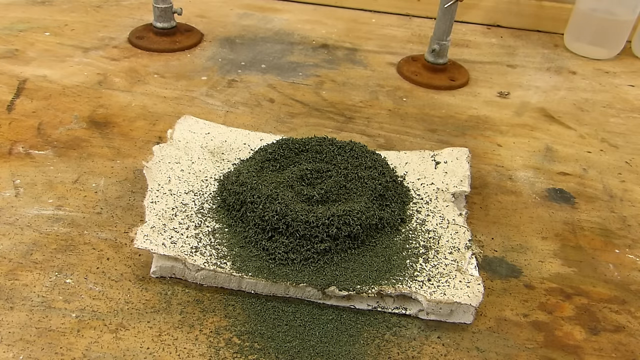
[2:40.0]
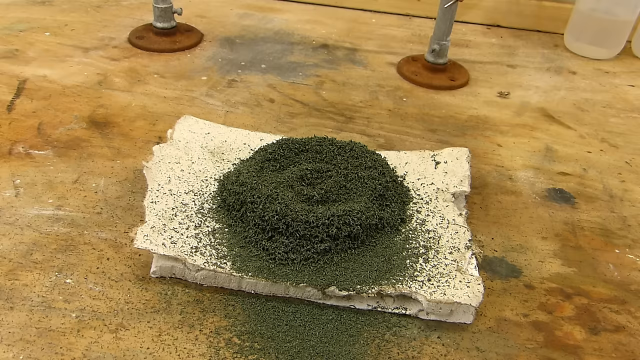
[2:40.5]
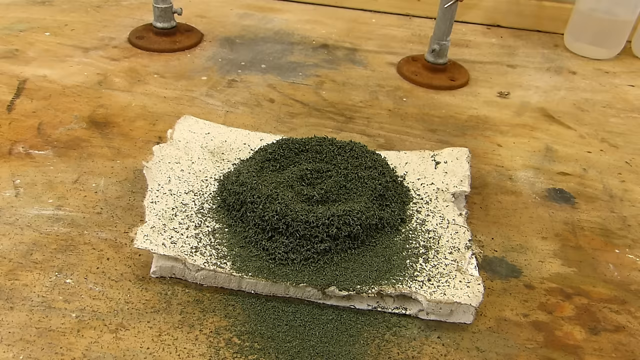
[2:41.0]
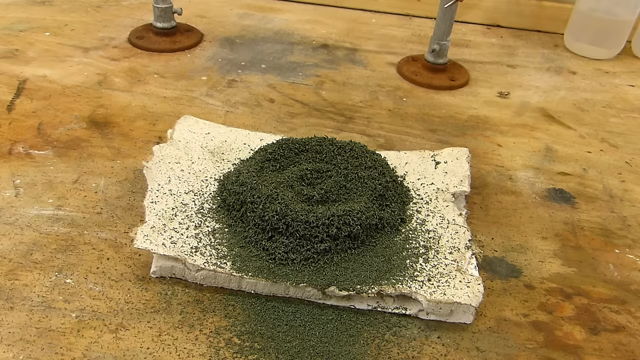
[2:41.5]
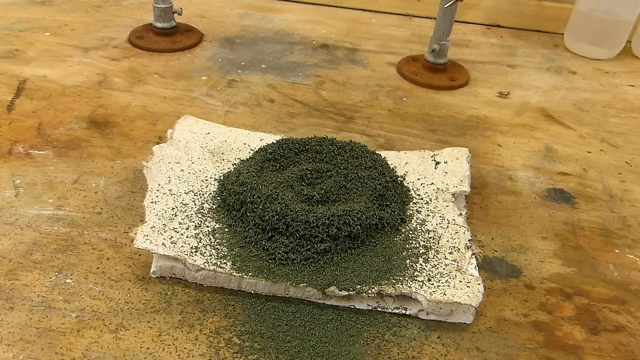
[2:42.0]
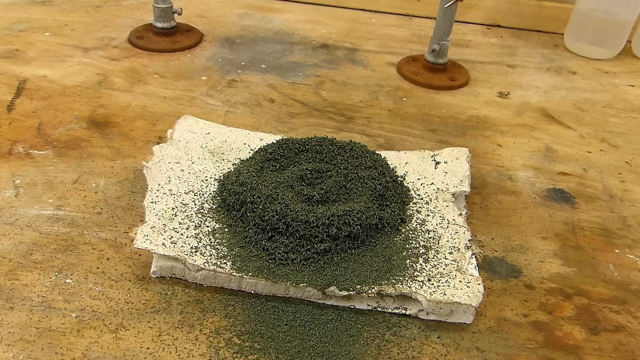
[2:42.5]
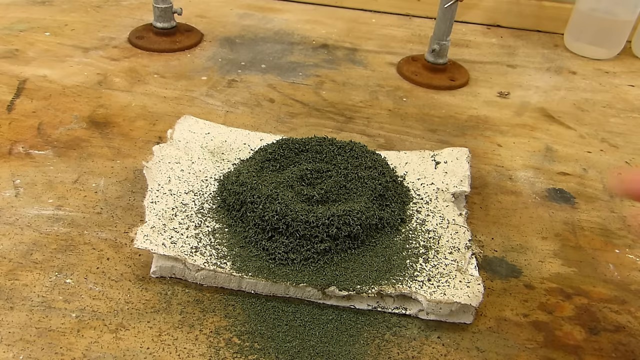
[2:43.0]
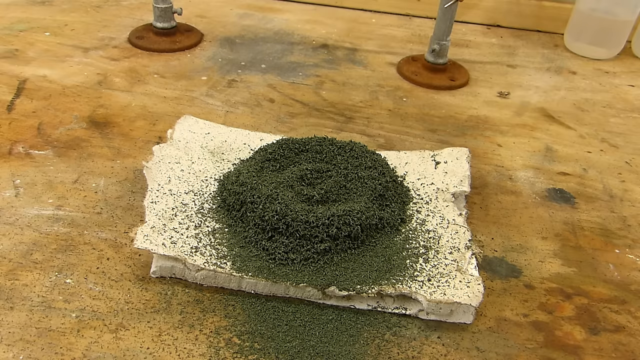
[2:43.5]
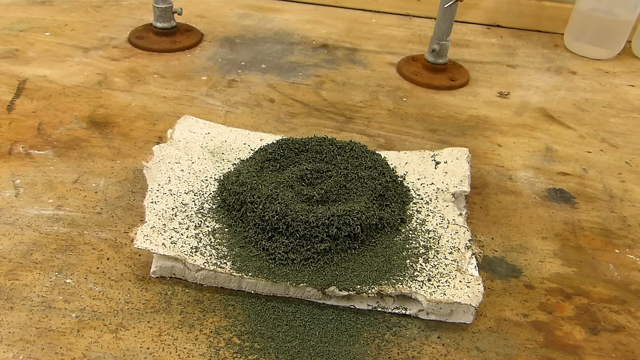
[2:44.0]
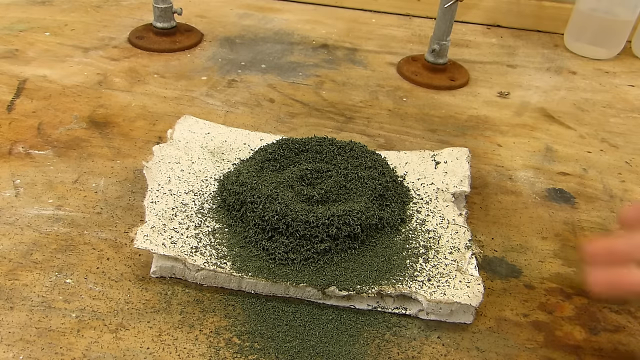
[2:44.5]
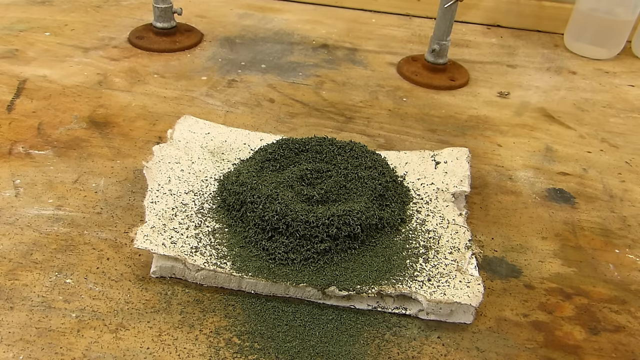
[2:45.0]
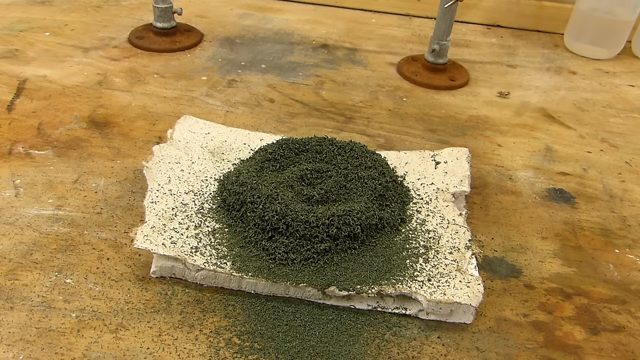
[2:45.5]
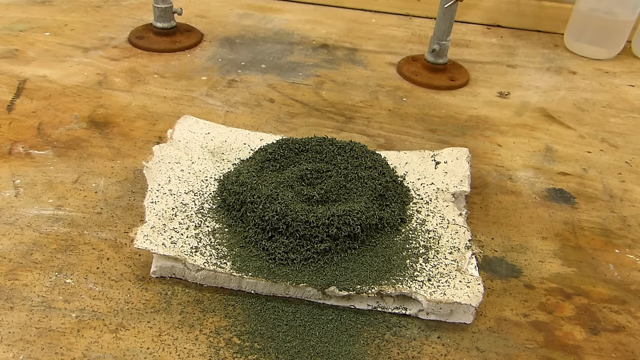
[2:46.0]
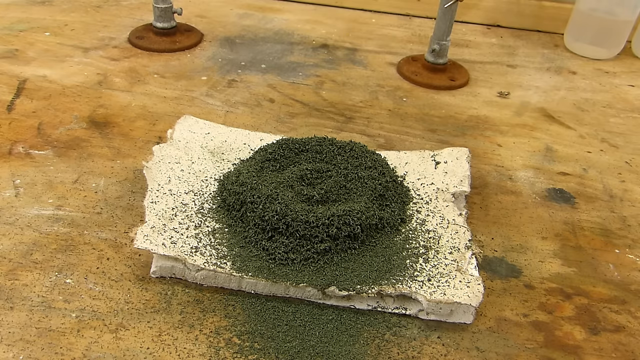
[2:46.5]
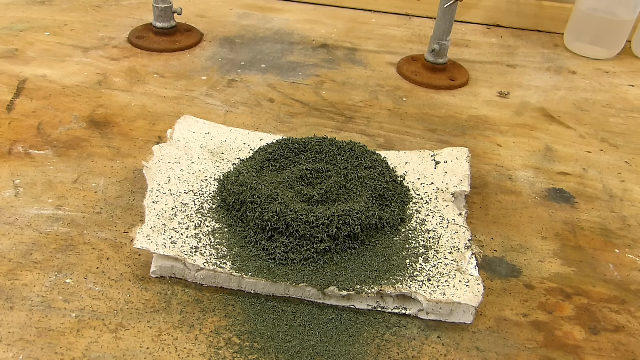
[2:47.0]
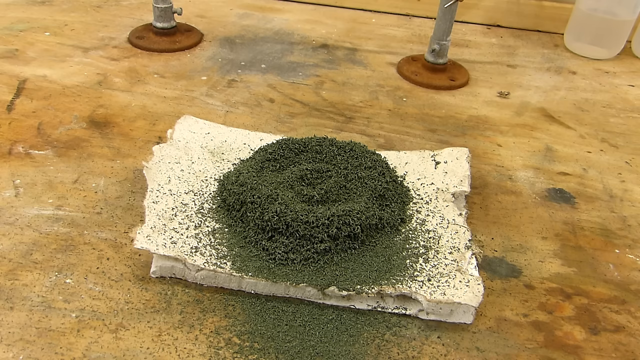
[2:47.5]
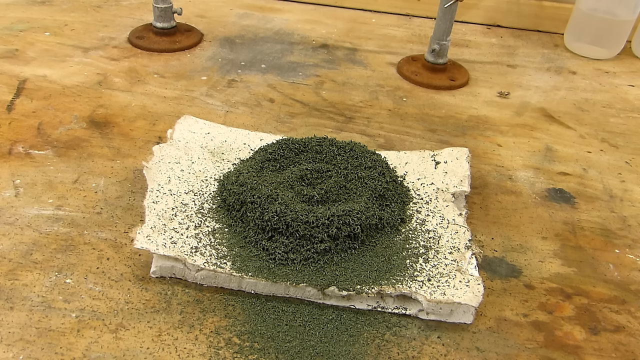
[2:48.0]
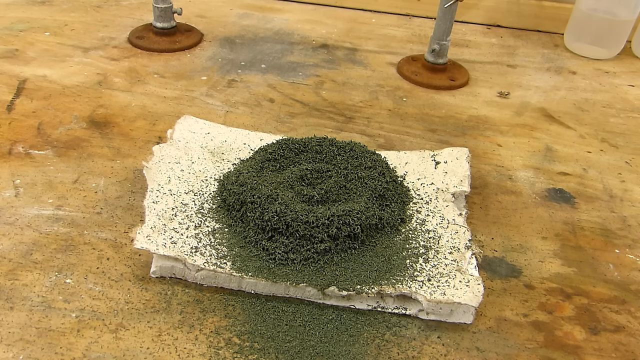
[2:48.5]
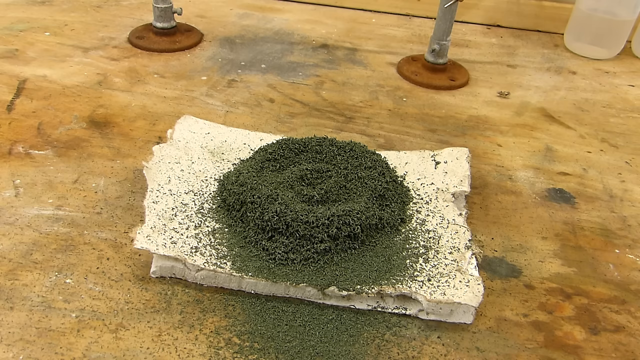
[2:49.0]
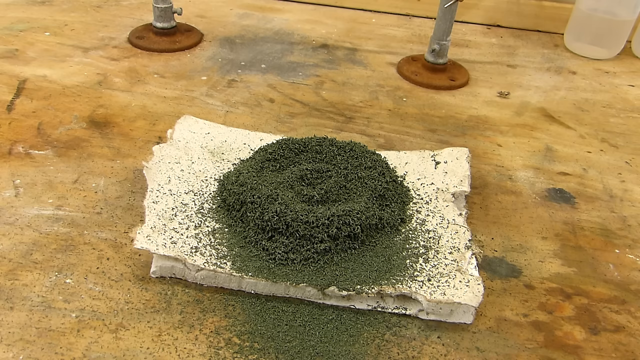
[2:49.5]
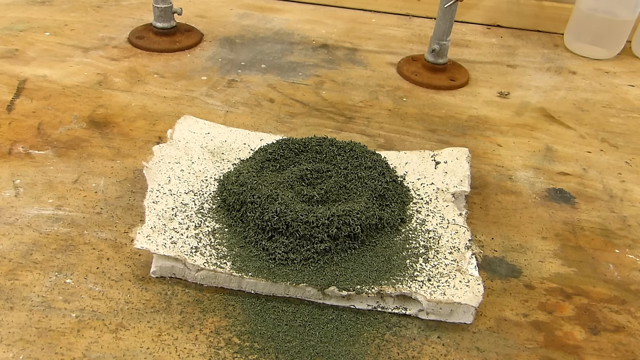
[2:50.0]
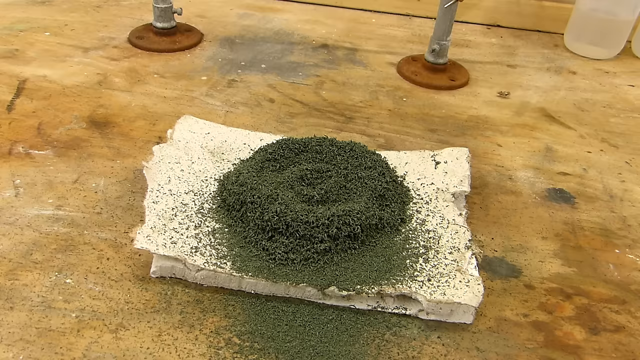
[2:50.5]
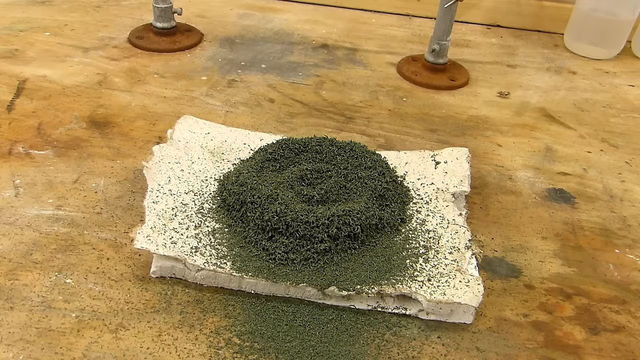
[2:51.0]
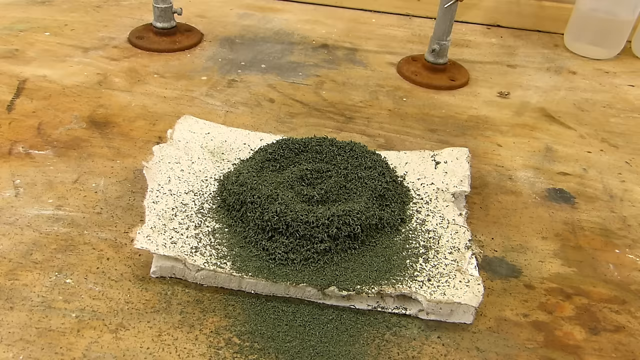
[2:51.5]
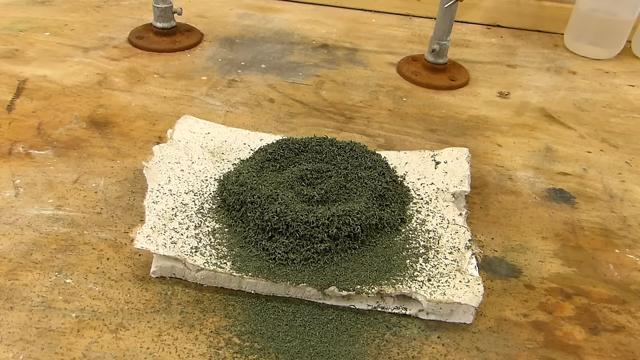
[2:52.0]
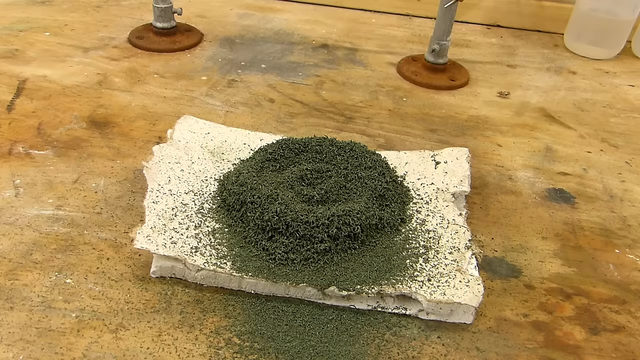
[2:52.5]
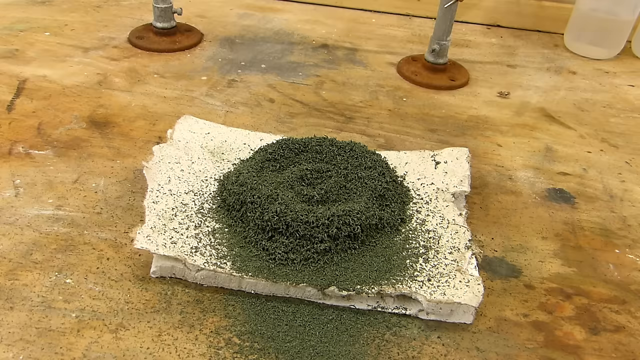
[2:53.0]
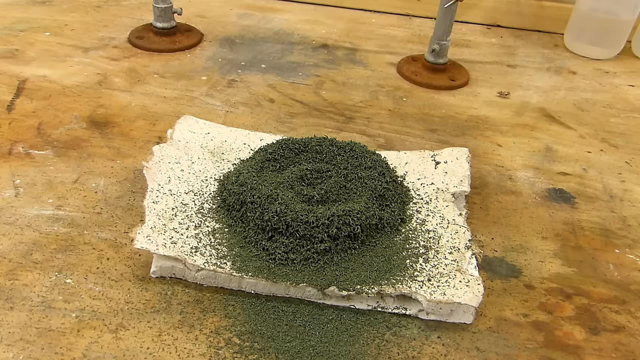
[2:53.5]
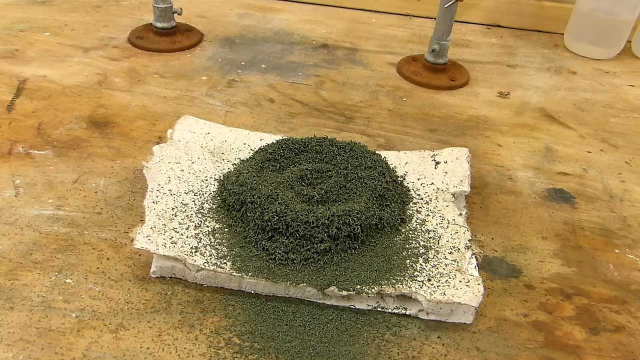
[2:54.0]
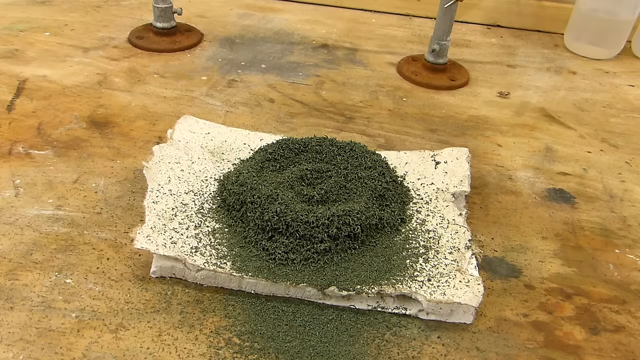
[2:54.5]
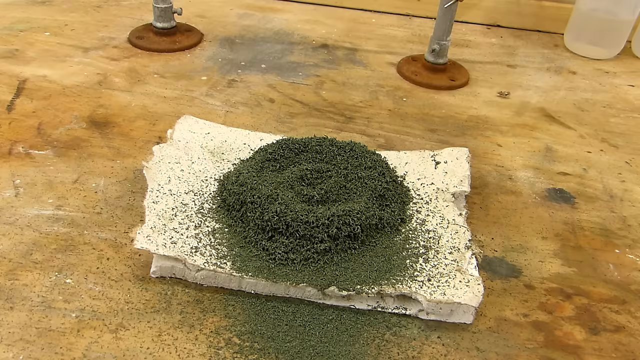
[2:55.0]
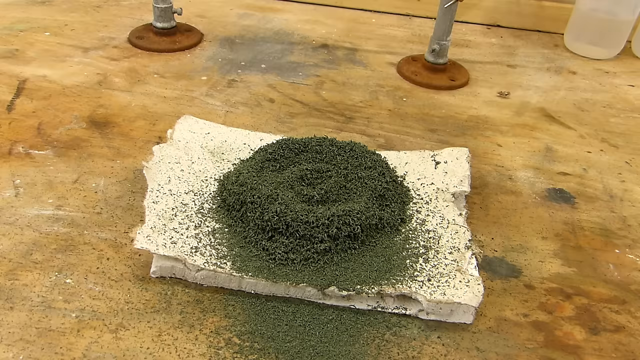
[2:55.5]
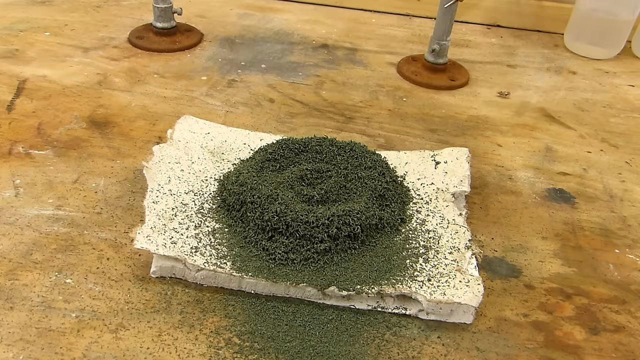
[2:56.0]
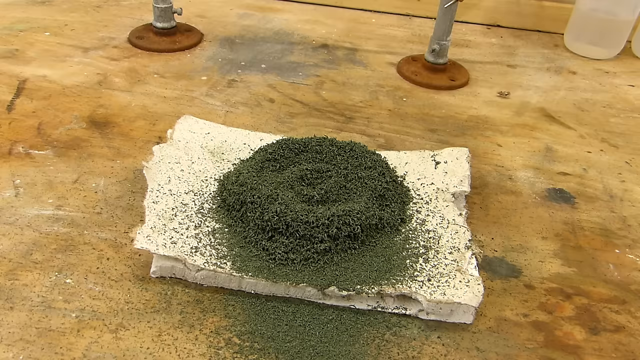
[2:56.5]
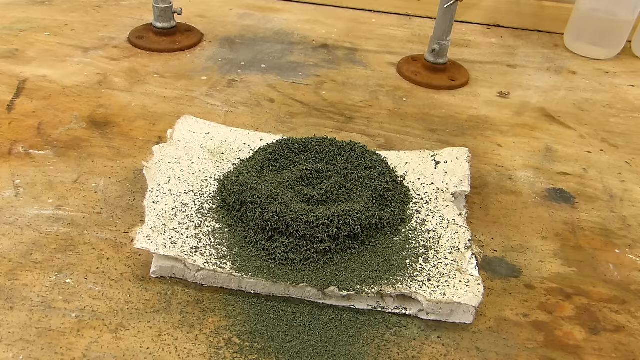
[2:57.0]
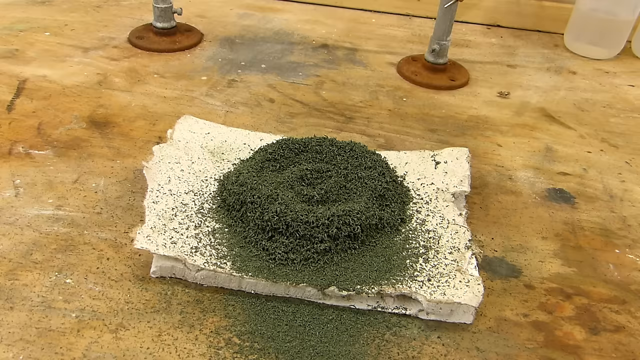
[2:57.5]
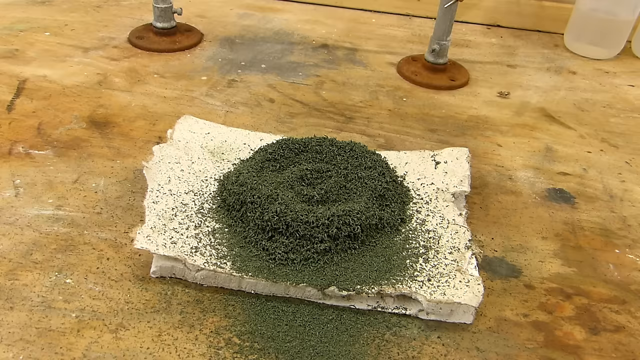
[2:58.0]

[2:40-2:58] A little swervy squiggle has been made in the middle of the pile, which looks much bigger than the original orange pile. The tips of his fingers move quickly across the right side of the screen. Then neither he nor the silver tool is visible anymore; only the pile of brown-black dust remains on the white wooden slab, which is on a distressed brown wooden surface.